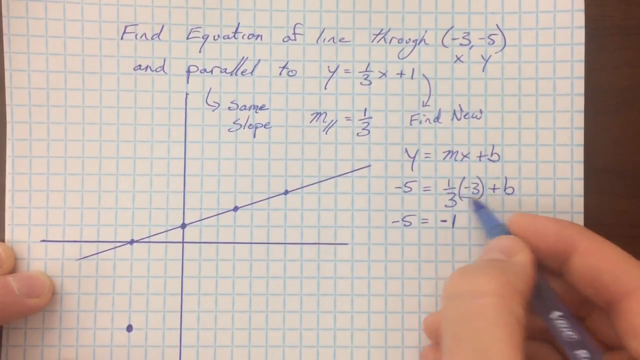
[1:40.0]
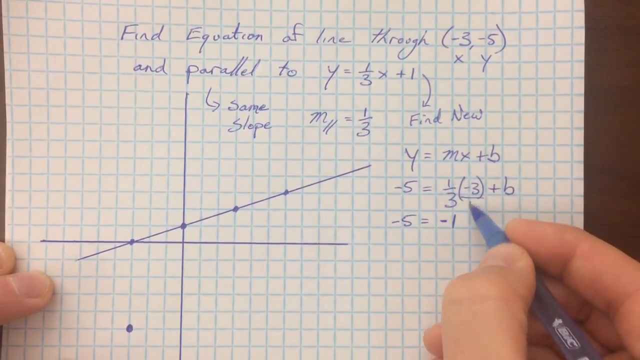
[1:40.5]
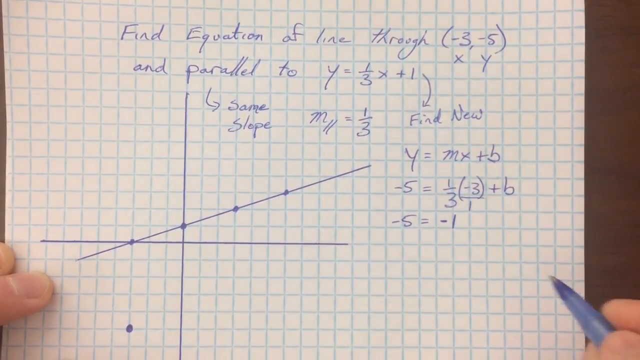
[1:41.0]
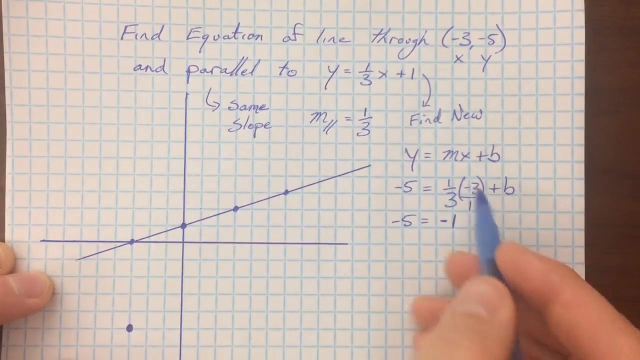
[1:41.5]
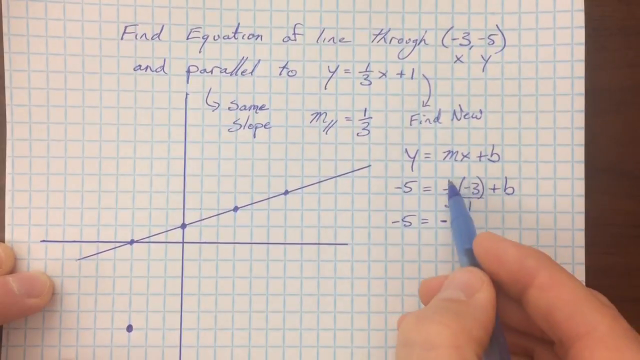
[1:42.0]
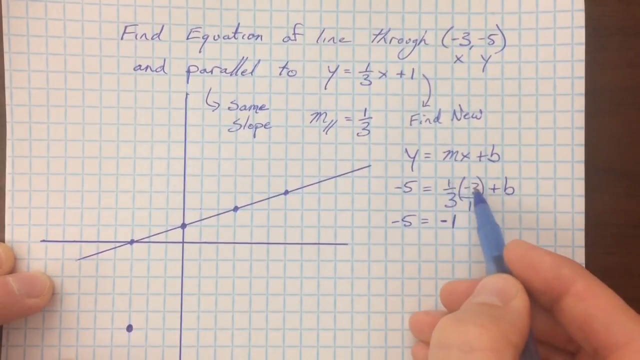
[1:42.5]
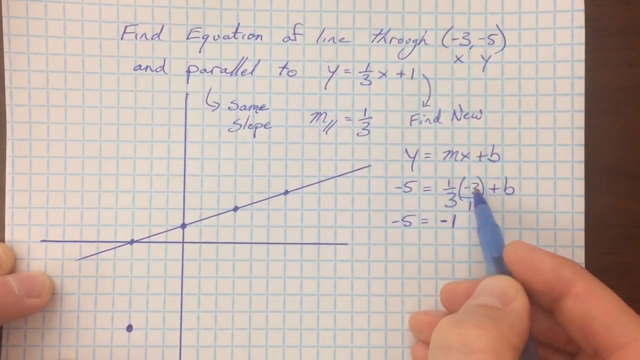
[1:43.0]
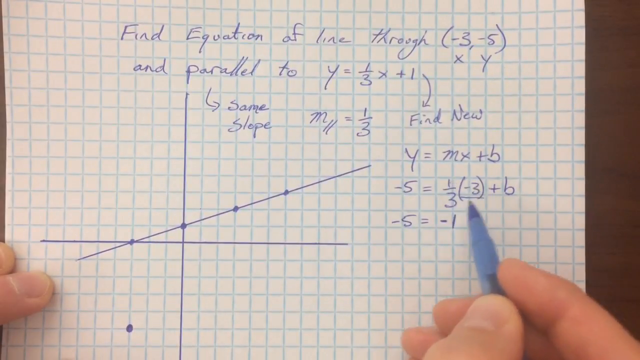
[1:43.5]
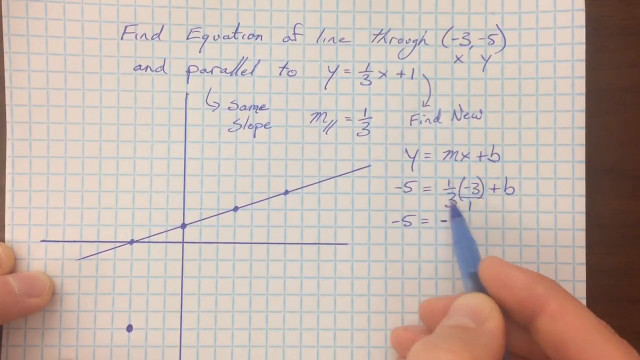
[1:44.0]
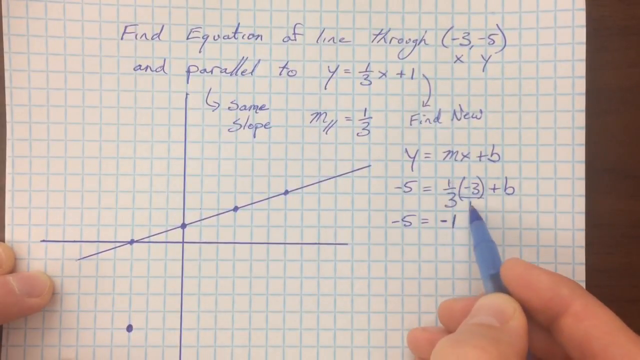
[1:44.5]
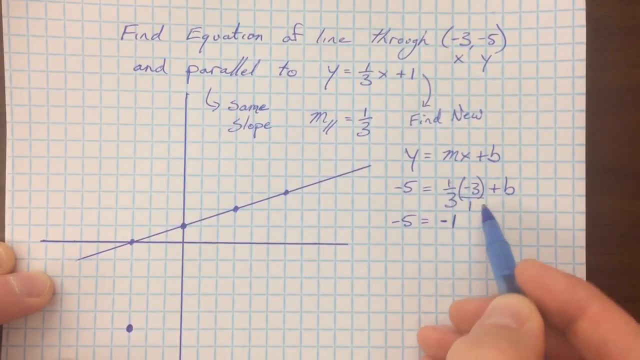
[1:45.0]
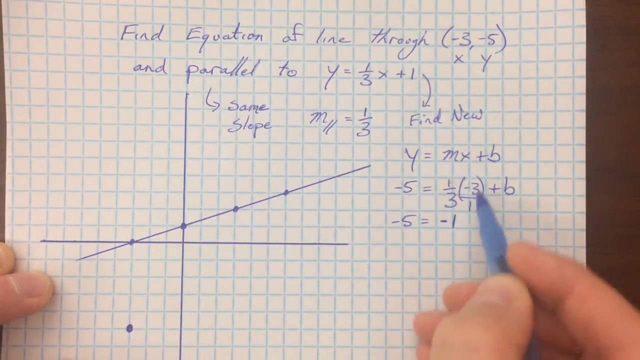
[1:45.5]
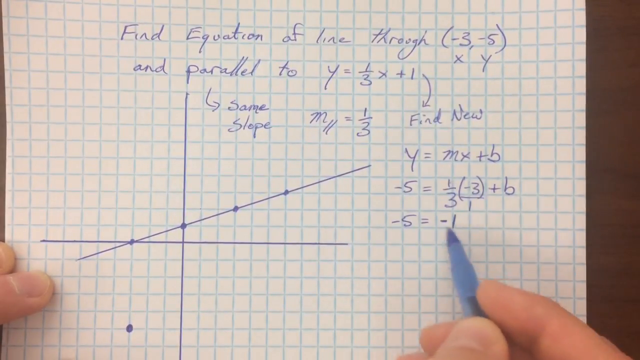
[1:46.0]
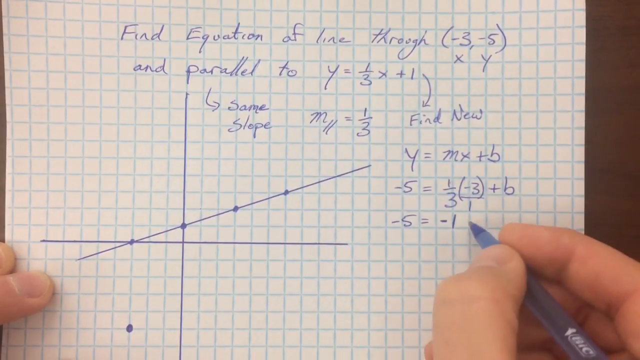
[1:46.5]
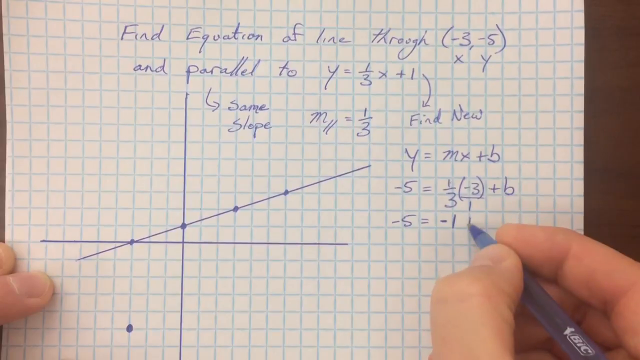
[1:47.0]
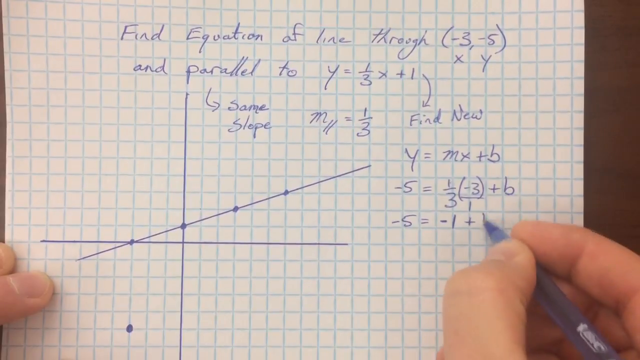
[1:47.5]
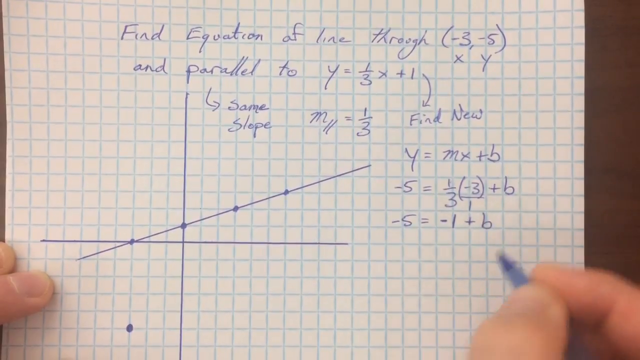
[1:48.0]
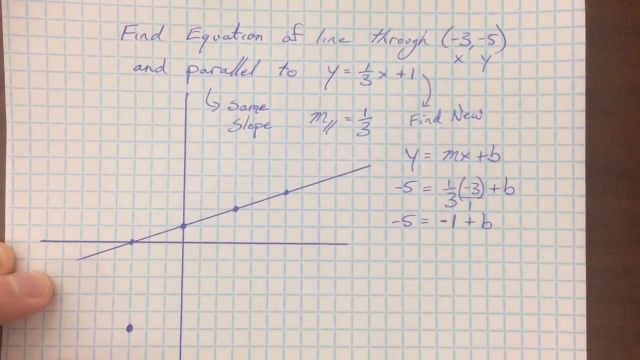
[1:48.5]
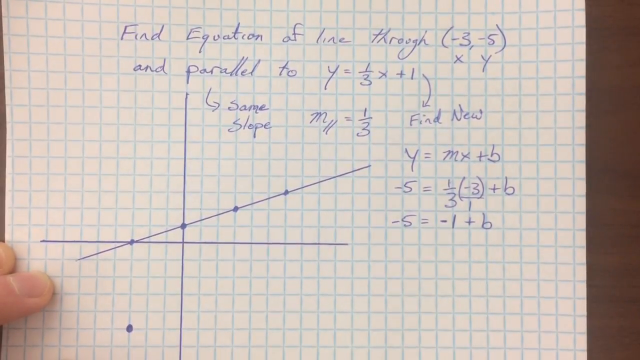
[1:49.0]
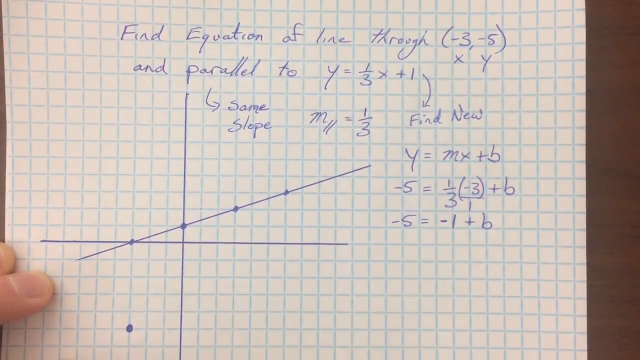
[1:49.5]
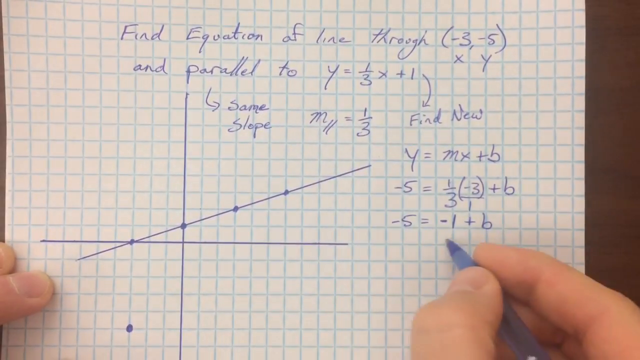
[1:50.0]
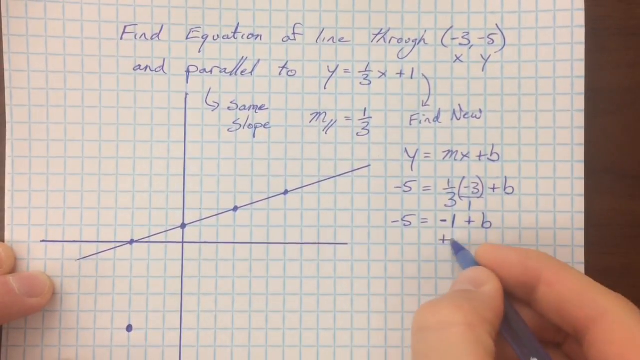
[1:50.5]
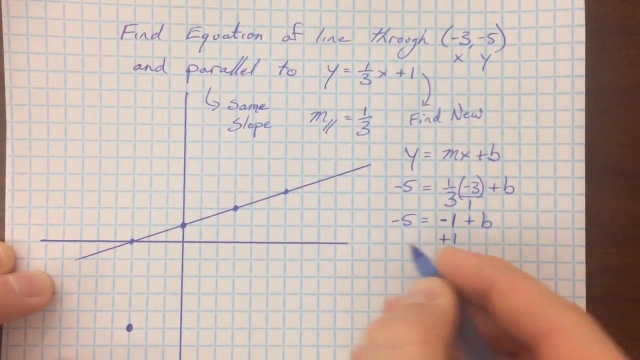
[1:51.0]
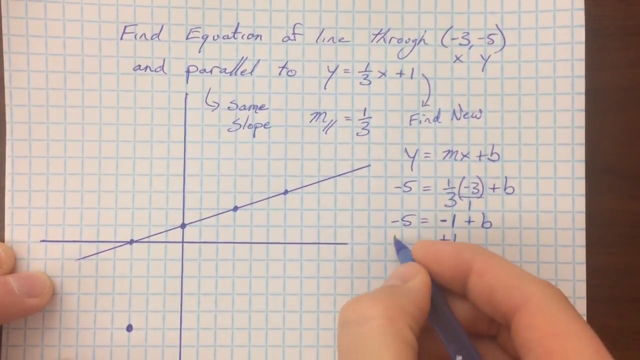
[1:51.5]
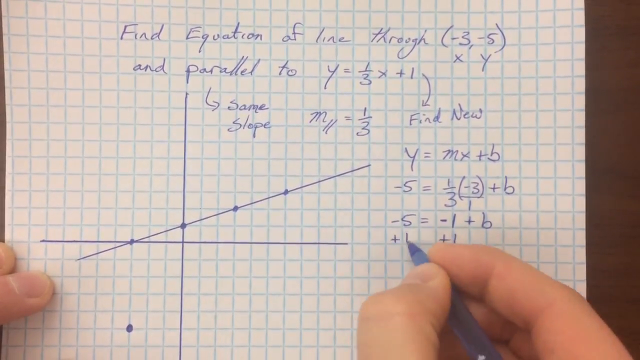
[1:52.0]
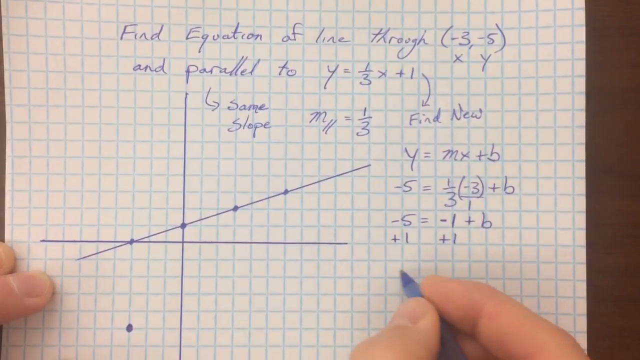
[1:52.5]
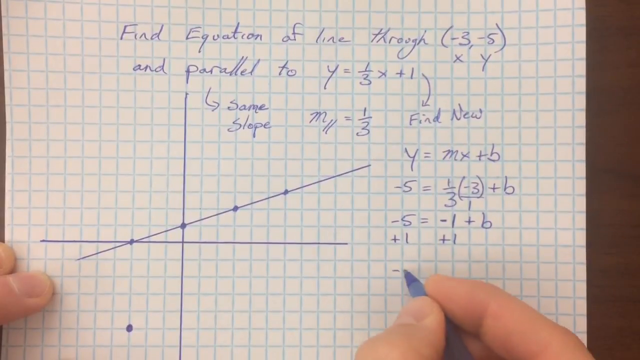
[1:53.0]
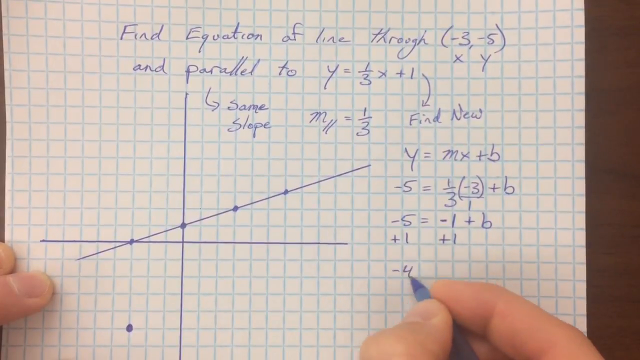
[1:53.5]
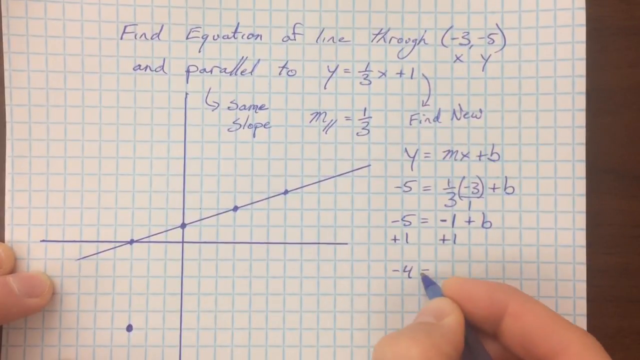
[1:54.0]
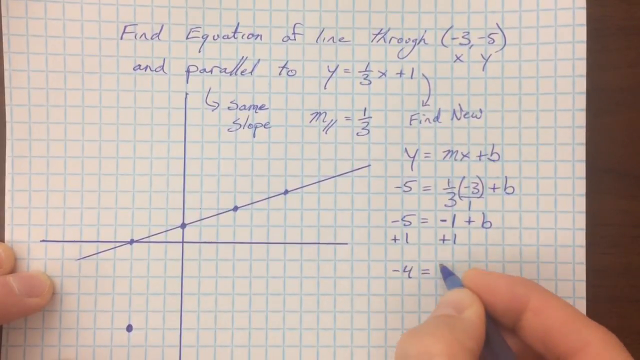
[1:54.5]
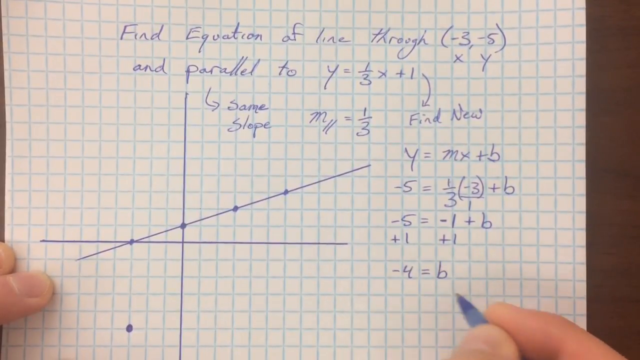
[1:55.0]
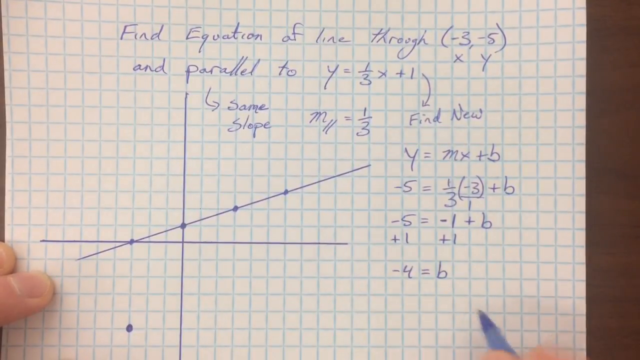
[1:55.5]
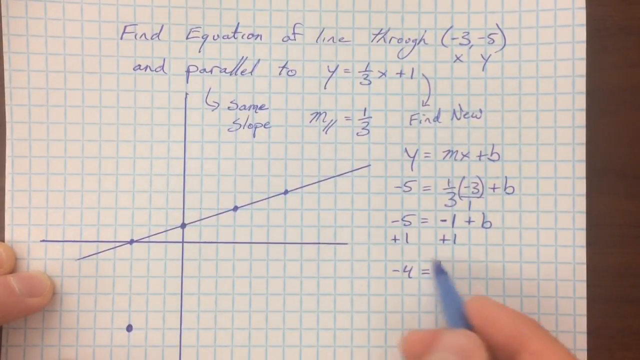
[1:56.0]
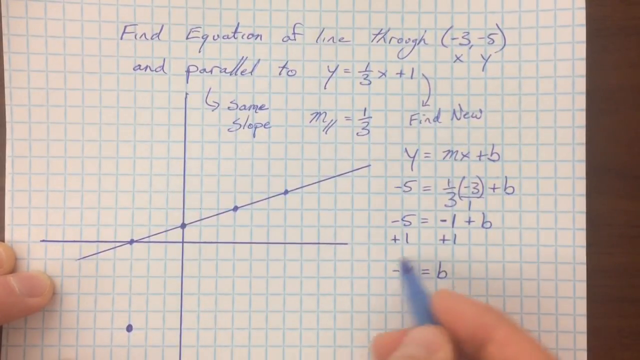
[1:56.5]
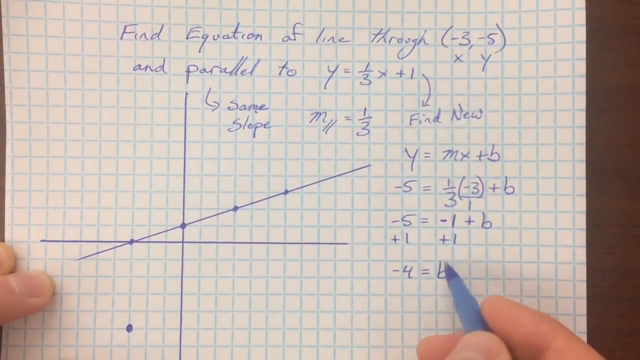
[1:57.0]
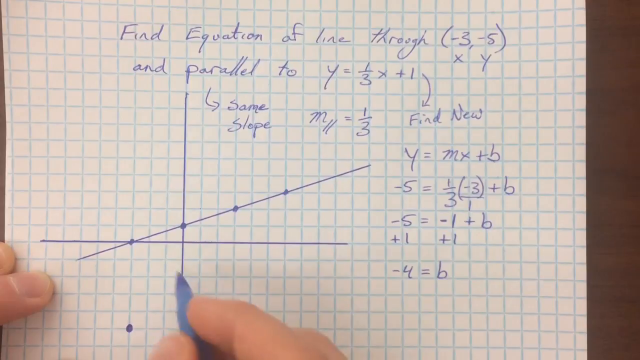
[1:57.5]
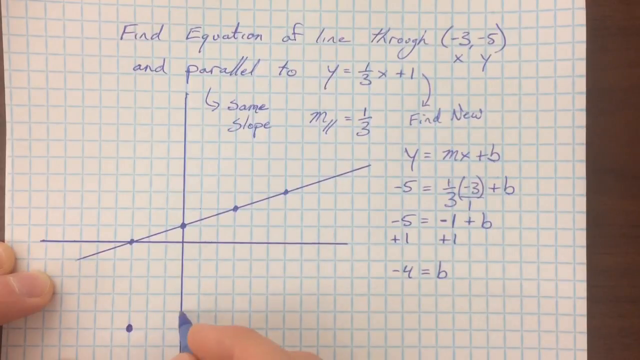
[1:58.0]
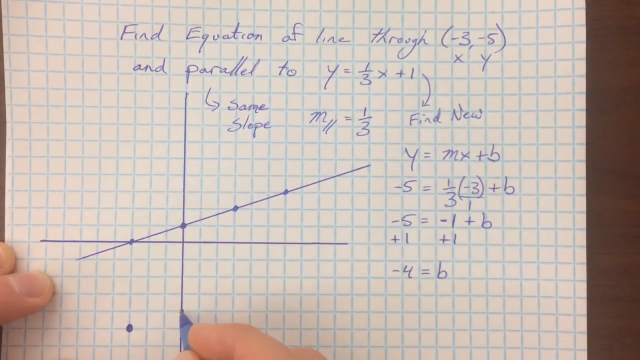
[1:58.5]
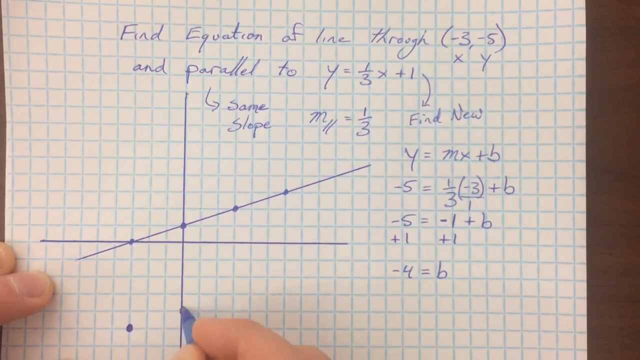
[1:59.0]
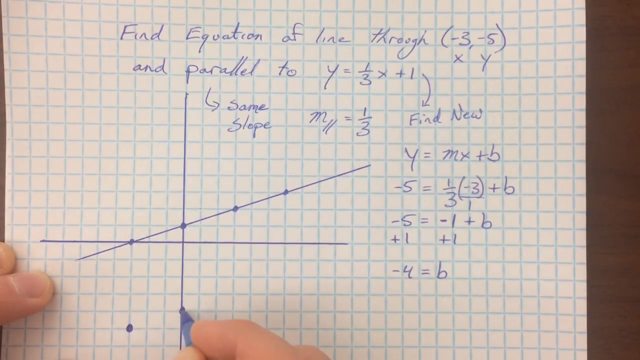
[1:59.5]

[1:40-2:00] The man continues solving, pointing out that -3, the x, is multiplied by the slope 1/3, which gives -1. He writes plus b, then adds 1 to both sides of the equation, adding 1 to -5 and to -1, ending with -4 = b. He then starts drawing the point -4 on his graph.